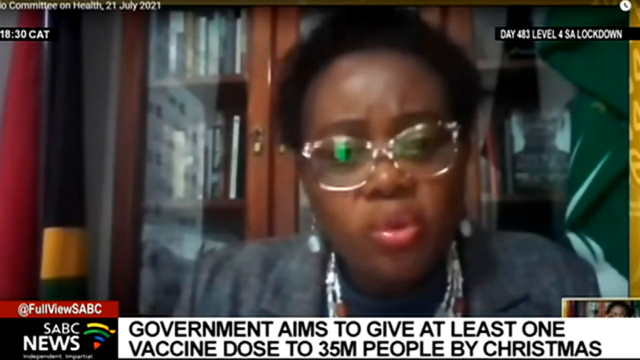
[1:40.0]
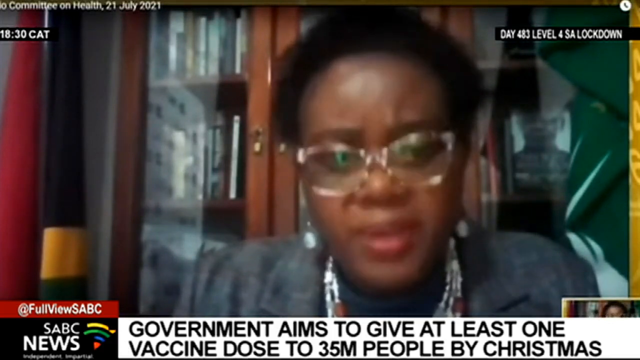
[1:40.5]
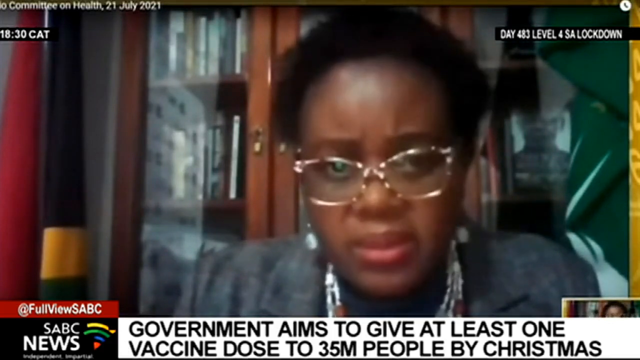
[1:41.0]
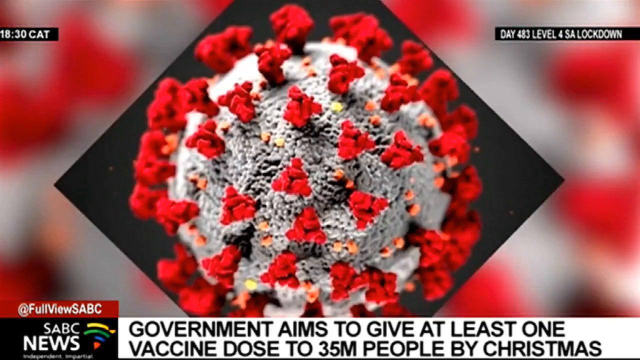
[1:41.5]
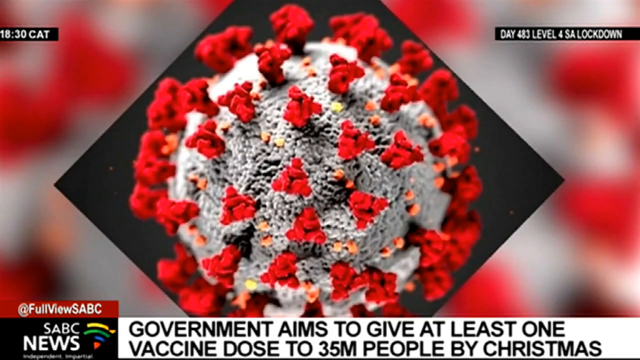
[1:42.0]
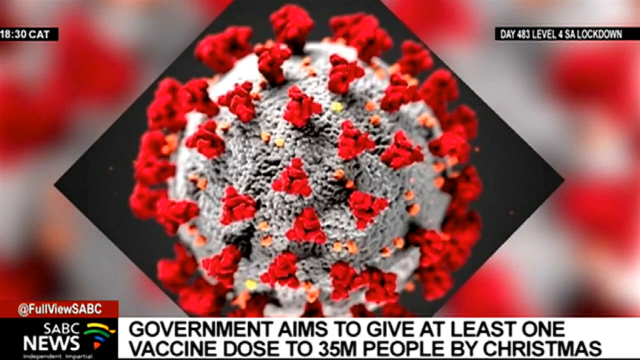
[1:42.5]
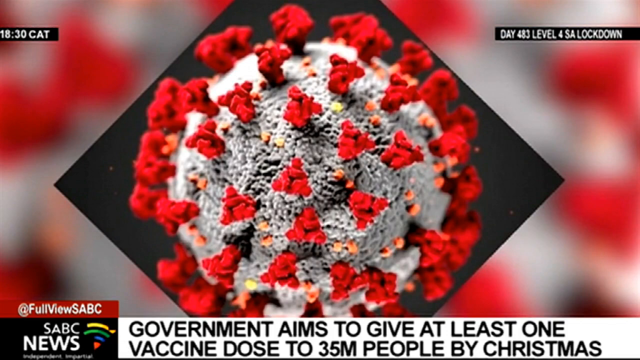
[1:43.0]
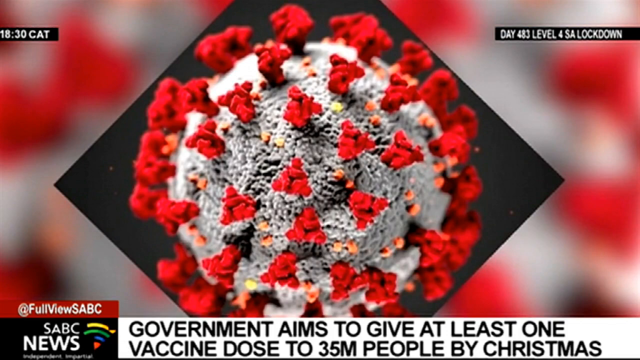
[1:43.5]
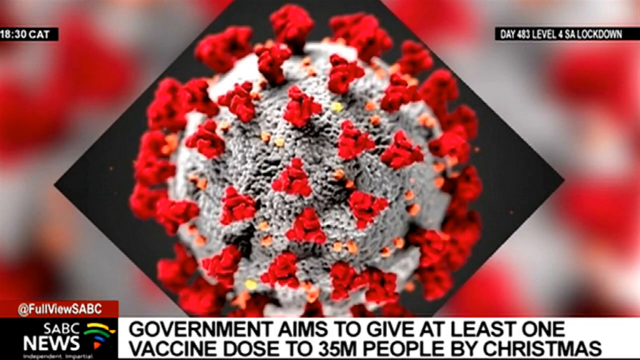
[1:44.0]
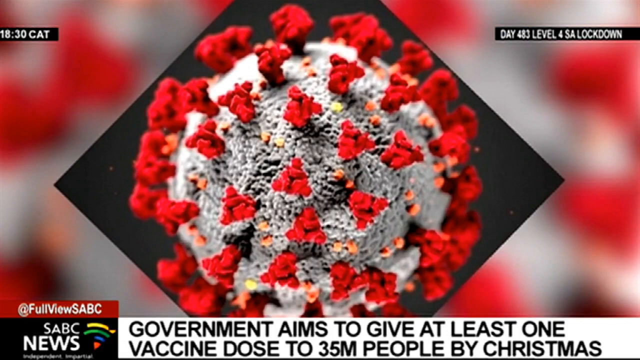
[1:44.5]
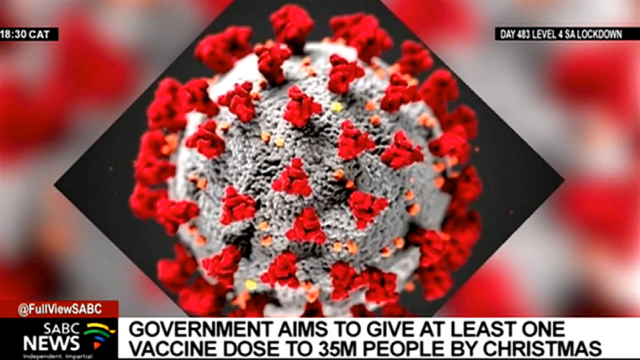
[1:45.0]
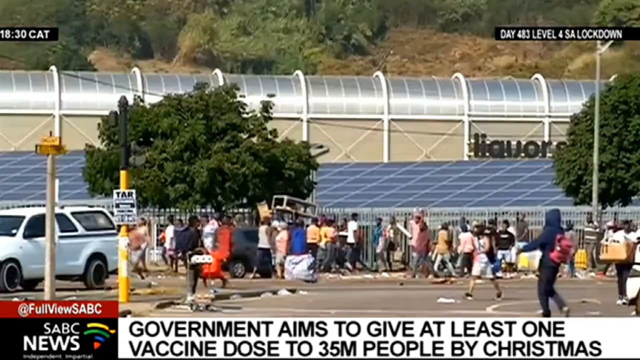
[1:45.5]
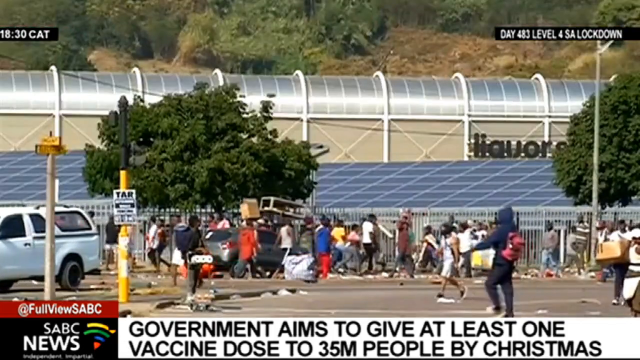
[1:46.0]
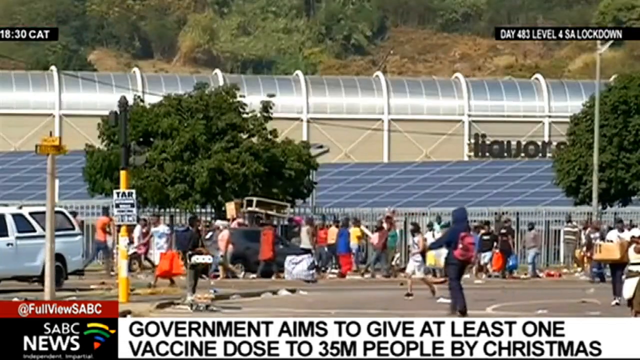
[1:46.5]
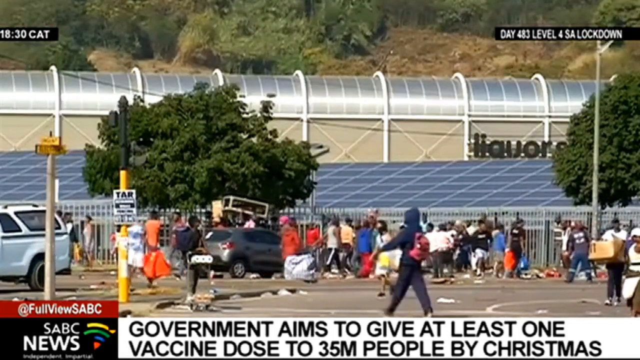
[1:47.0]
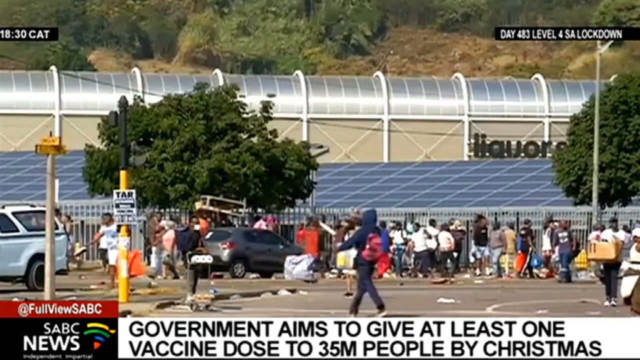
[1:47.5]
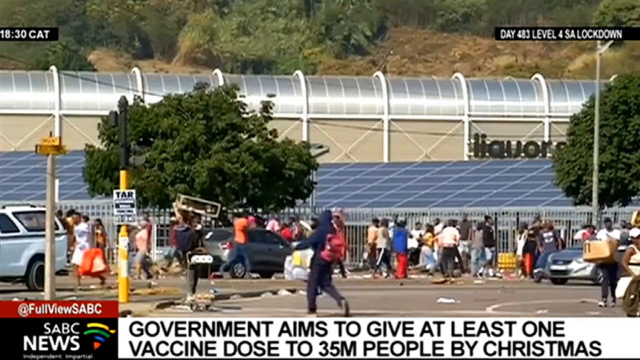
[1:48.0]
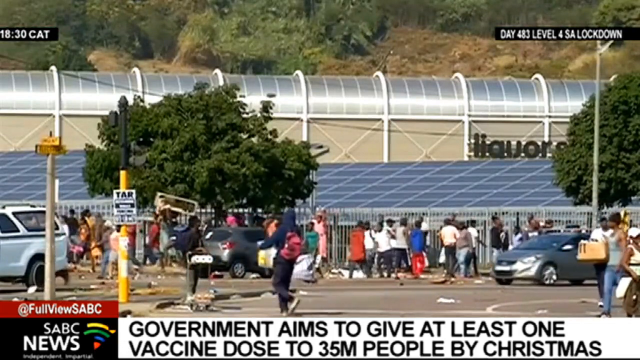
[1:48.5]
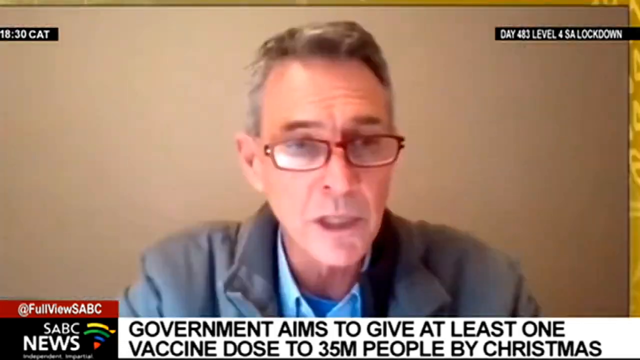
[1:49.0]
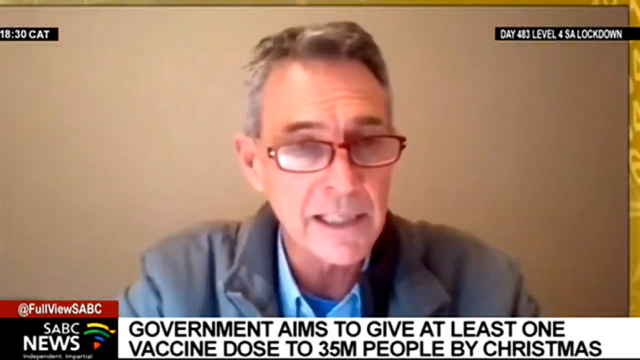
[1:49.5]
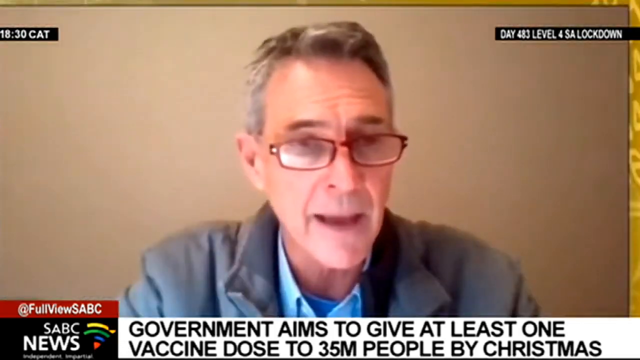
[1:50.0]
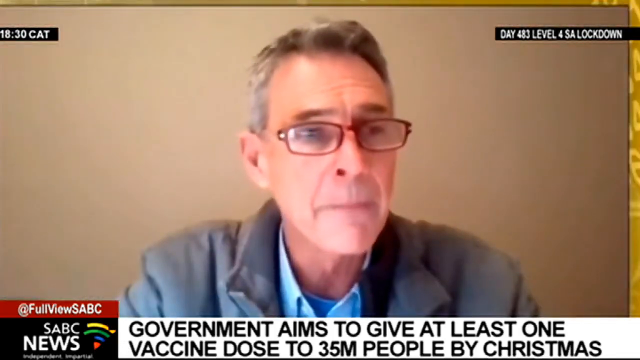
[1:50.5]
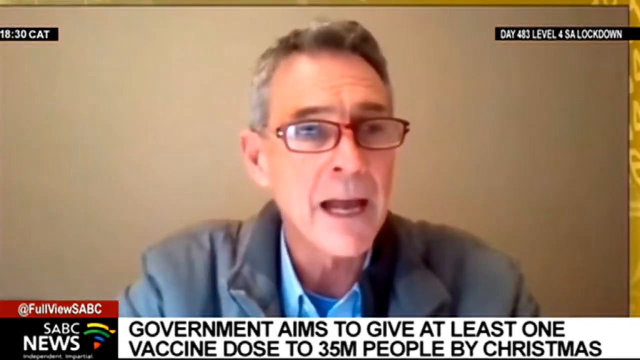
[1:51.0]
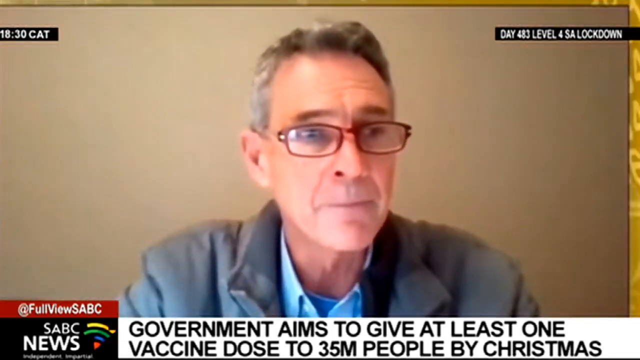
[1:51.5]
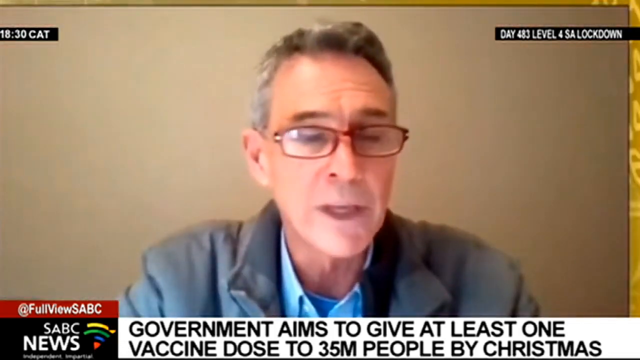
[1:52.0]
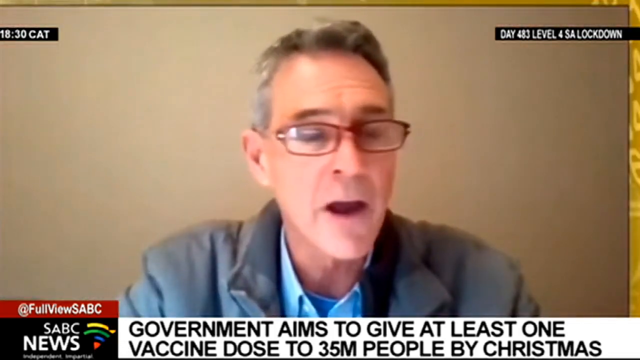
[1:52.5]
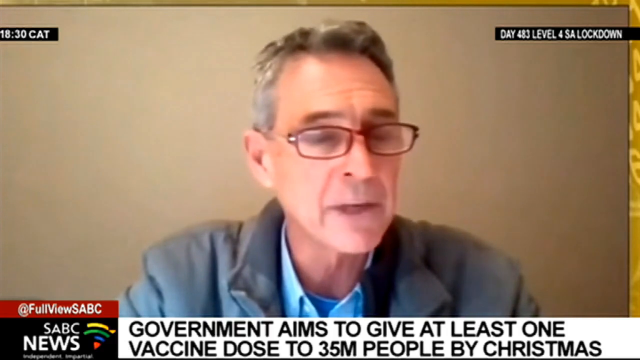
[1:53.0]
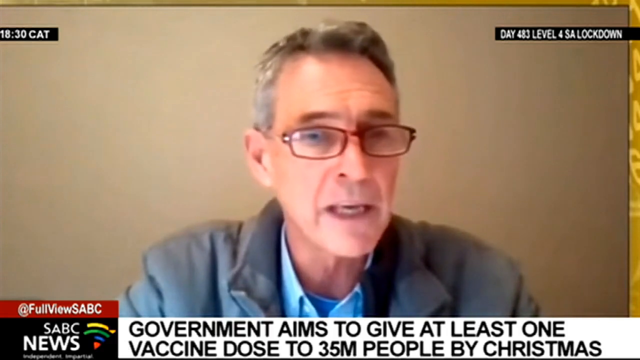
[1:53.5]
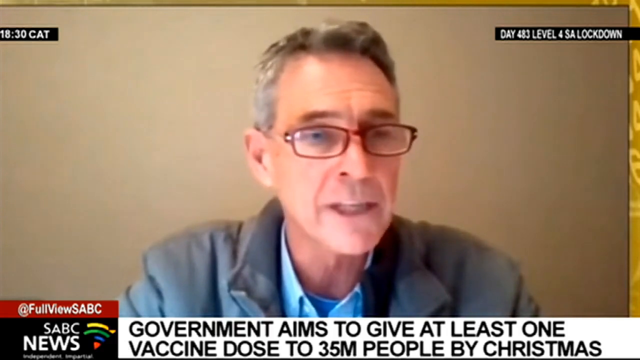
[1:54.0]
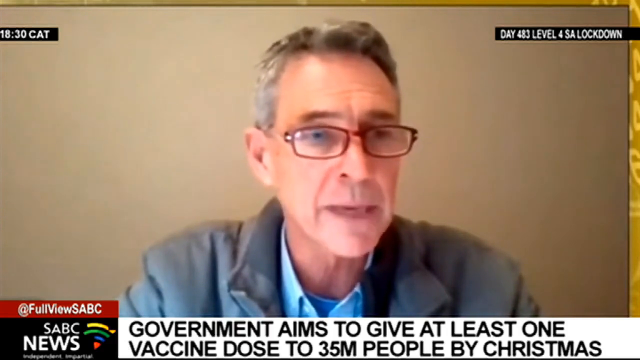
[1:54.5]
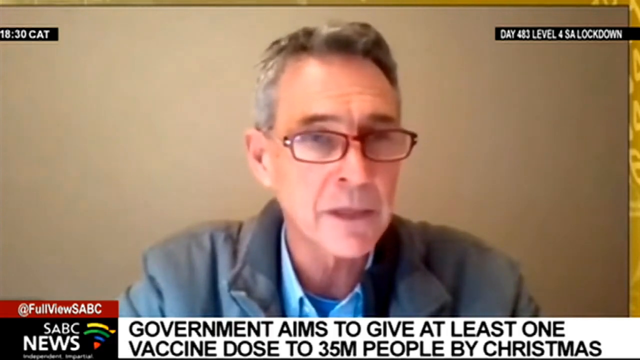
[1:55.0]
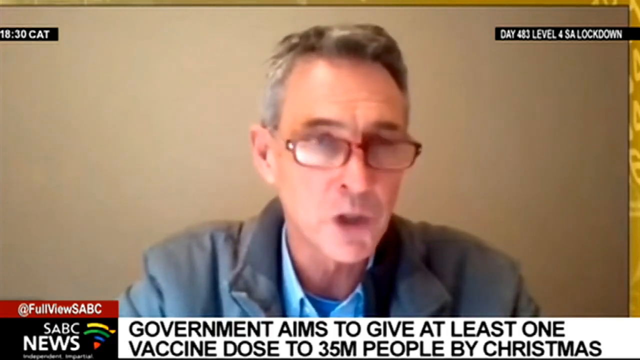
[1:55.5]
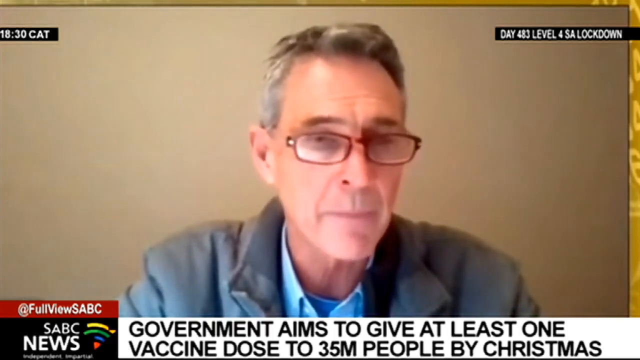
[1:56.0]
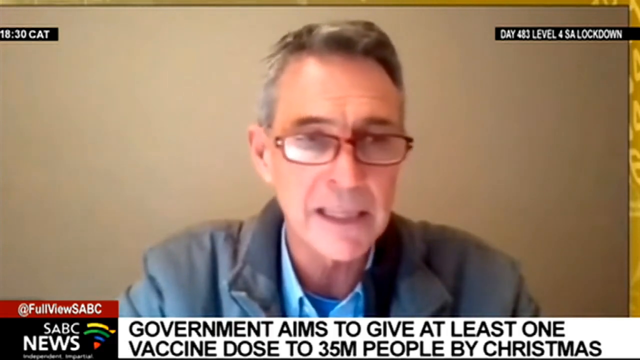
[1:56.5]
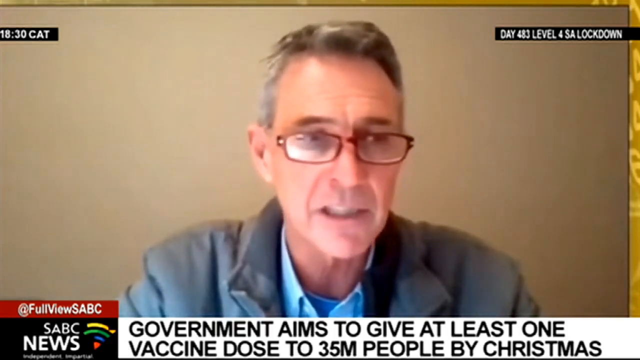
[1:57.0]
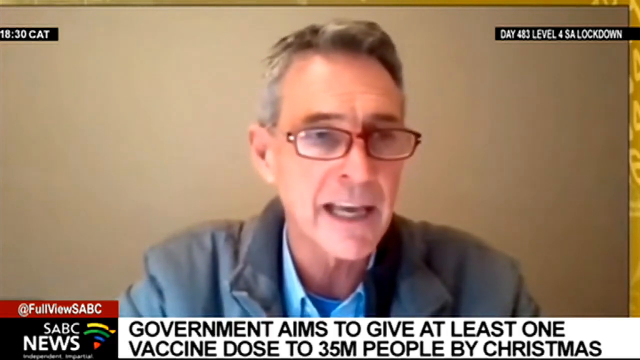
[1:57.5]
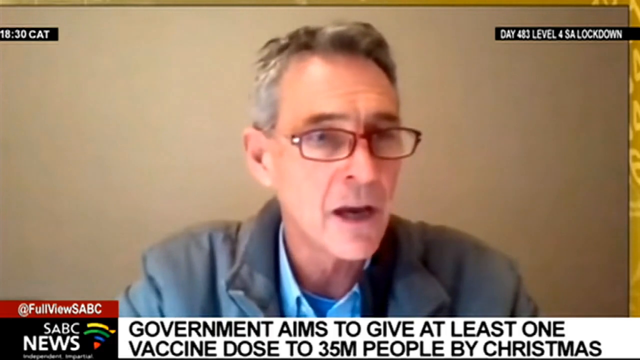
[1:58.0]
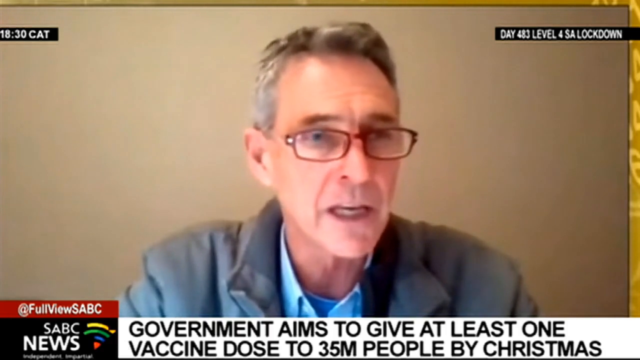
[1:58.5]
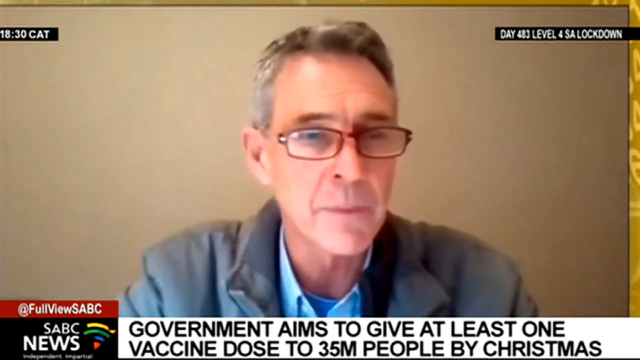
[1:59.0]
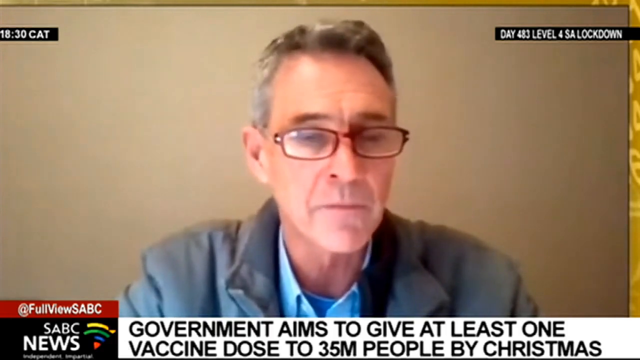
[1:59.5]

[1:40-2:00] The woman continues speaking. An animated image of the coronavirus appears, showing a circular white part with large tangled red sticks across it. The footage then shows many people, all wearing masks, walking in a parking lot, with a building behind them that appears to say "liquor store" on it, and cars driving on the roadway next to them. The man who spoke earlier then appears on screen and talks again. The video feeds of both people tuning in are of poor quality and quite blurry.